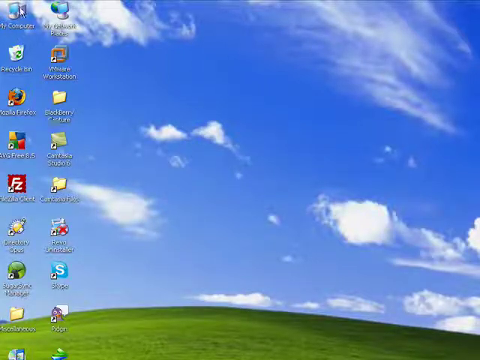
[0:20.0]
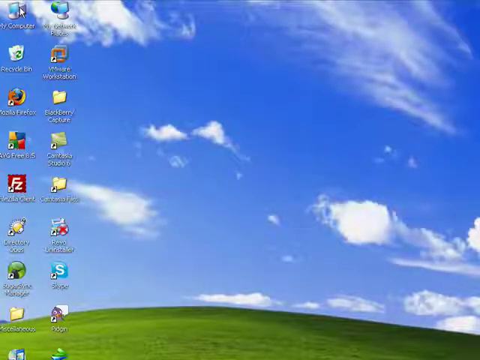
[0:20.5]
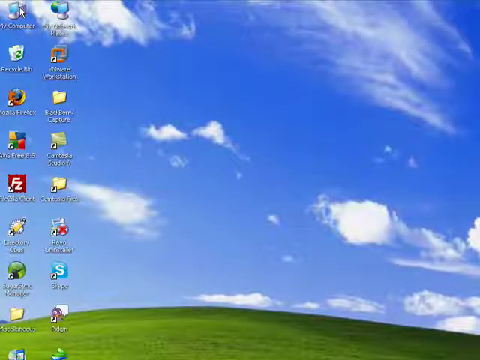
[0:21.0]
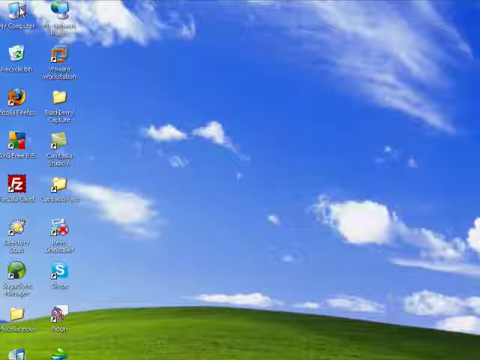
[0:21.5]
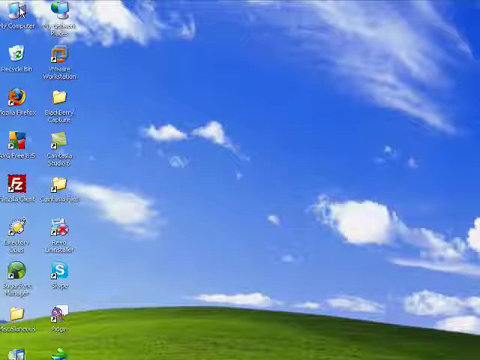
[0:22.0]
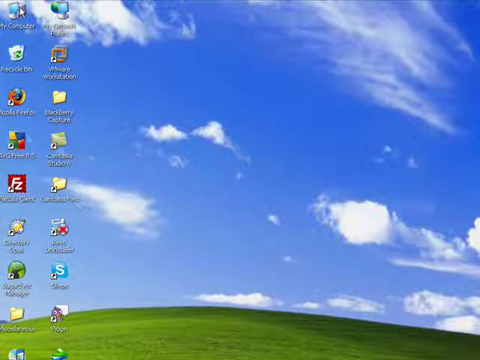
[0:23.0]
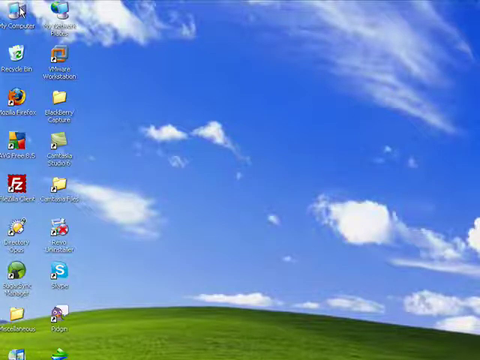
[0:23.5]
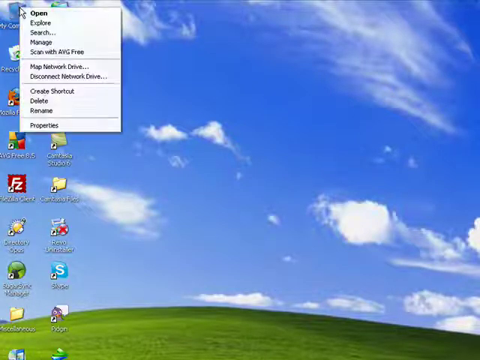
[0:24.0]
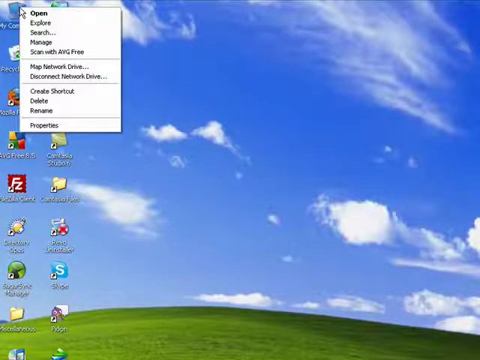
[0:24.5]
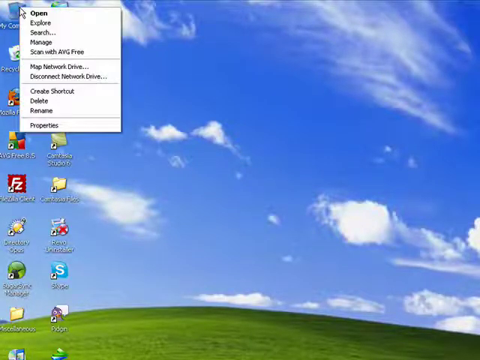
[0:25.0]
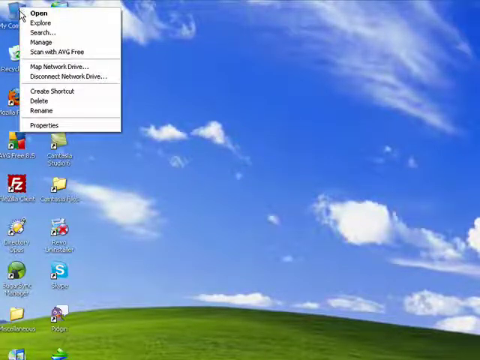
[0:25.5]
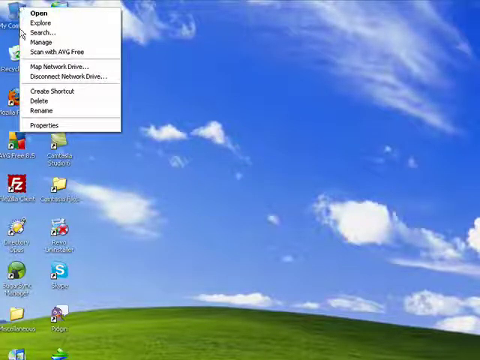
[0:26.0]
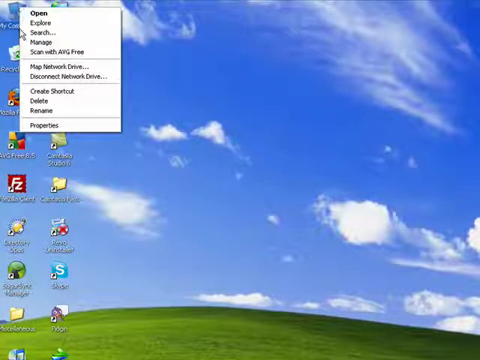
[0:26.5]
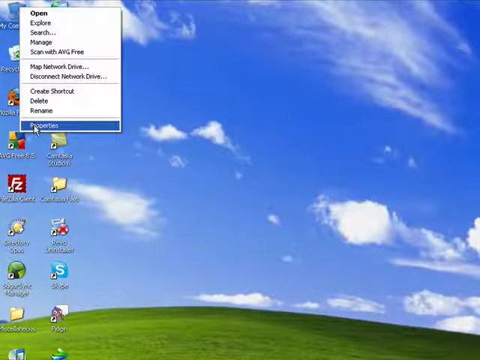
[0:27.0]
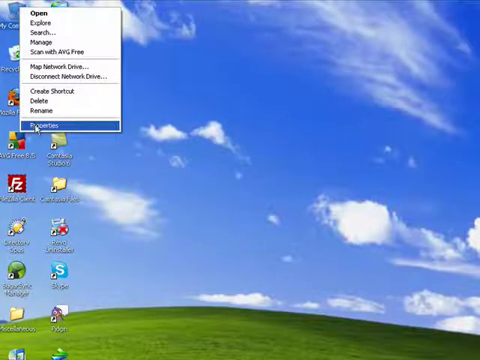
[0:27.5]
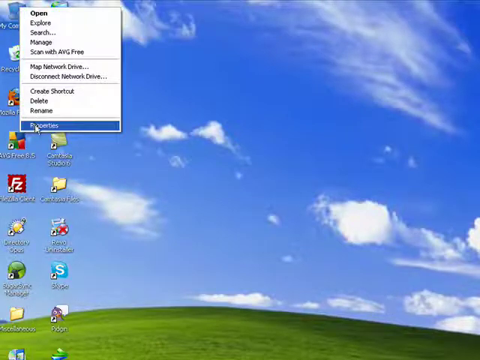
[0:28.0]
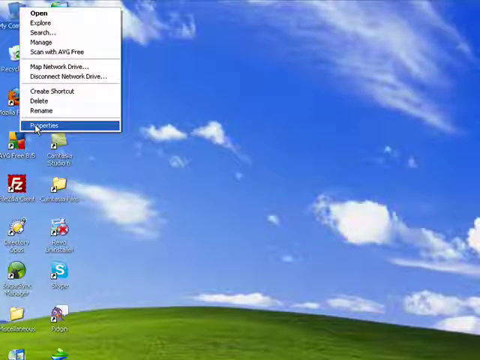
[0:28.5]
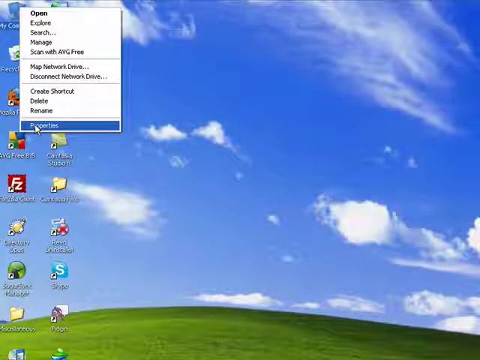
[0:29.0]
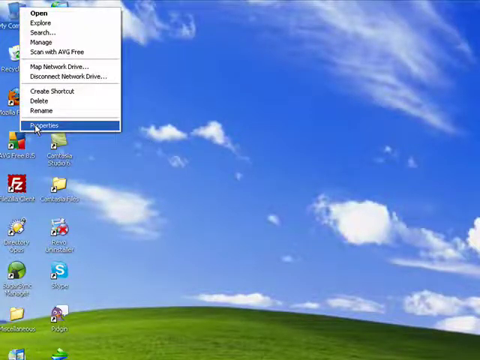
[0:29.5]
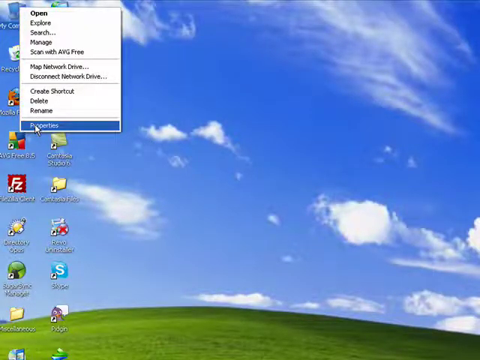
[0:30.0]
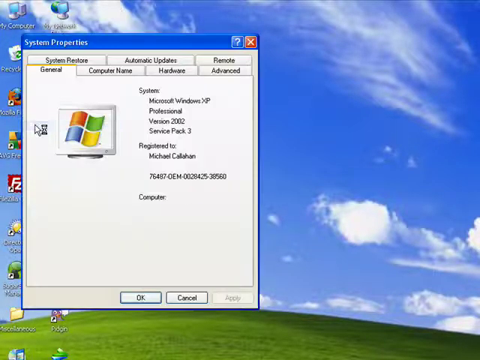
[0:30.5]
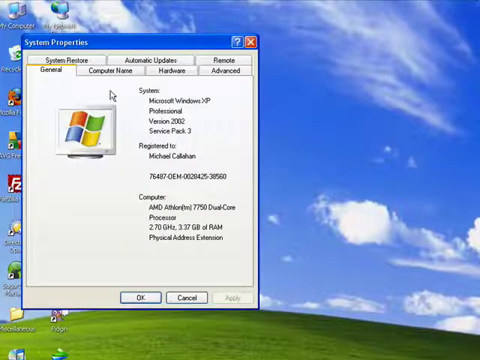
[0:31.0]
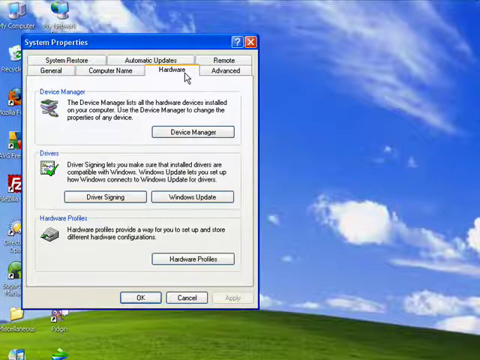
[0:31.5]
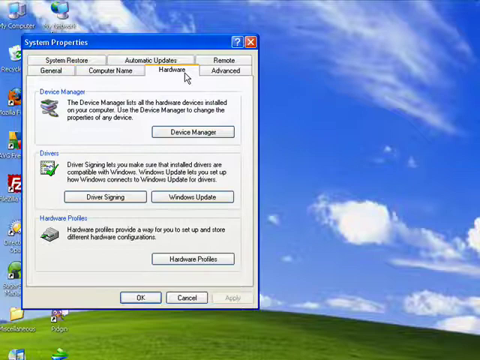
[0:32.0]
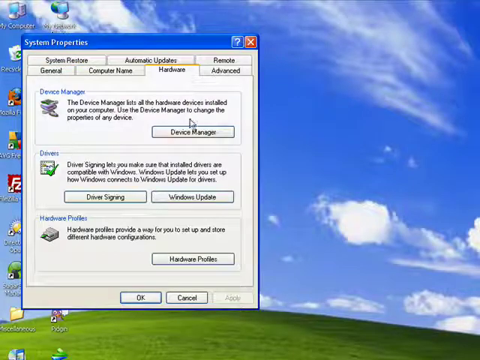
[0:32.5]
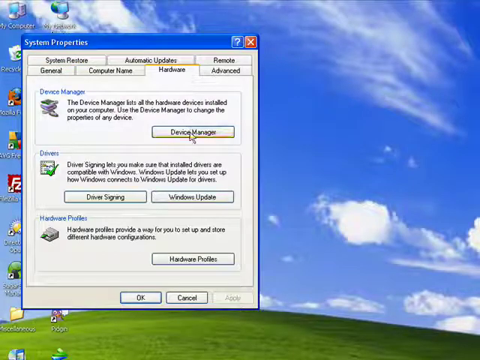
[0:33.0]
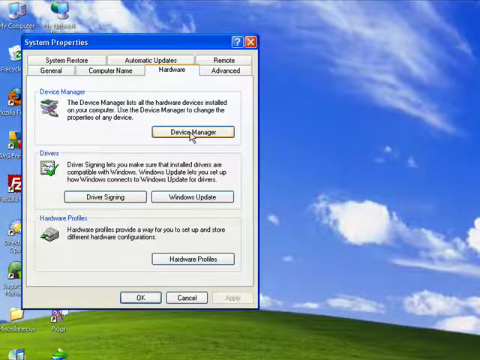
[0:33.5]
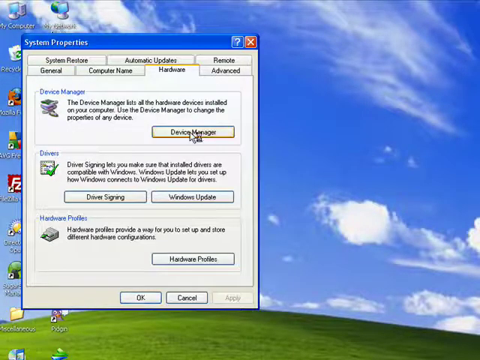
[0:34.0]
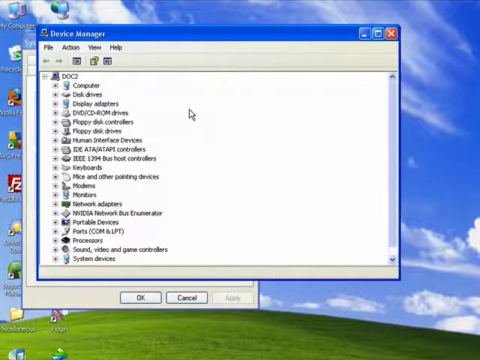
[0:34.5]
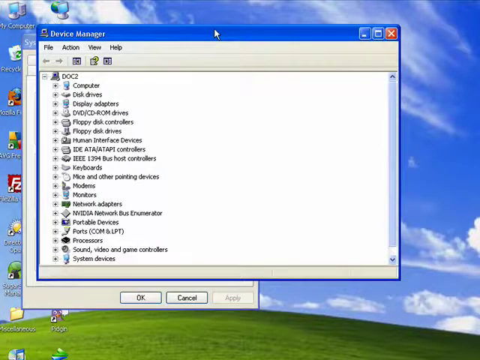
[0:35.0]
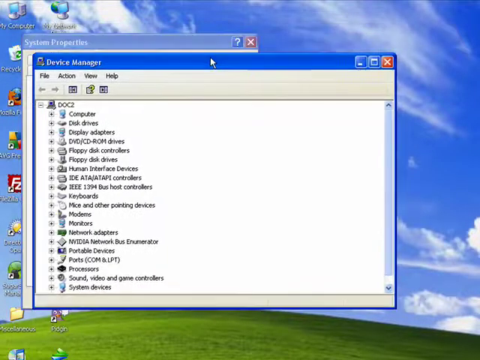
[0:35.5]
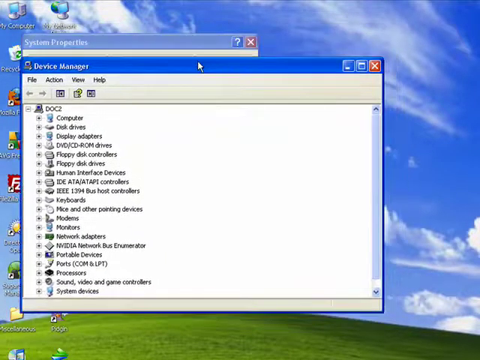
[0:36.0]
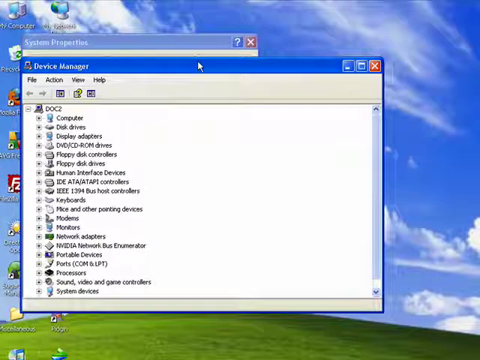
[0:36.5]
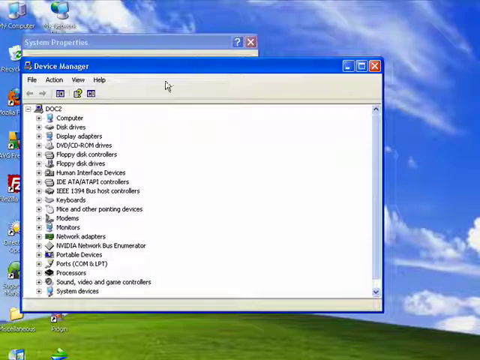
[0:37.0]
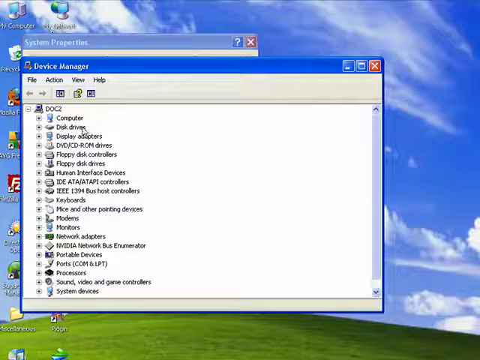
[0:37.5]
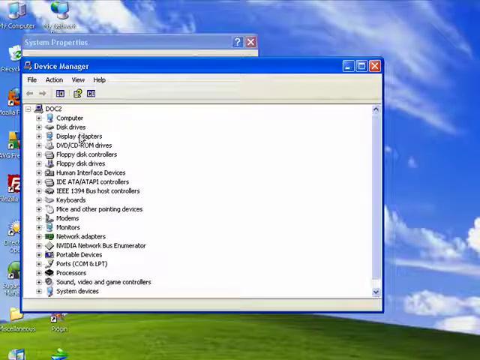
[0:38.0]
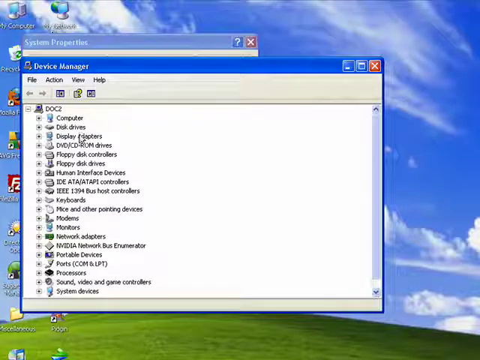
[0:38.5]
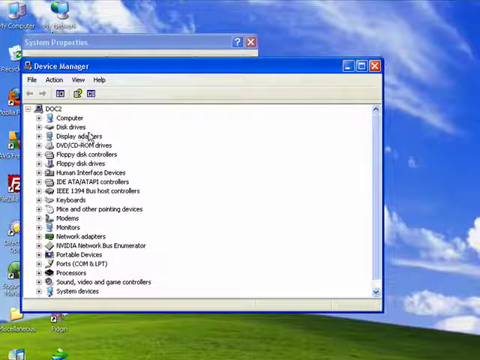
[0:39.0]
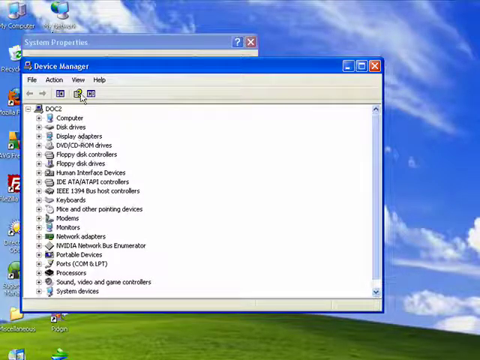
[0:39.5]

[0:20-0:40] The Windows home screen is shown with white clouds, blue sky and a hill at the bottom, and many icons on the left starting with My Computer at the top left. My Computer is right-clicked, and Properties is chosen from the drop-down menu, which leads to the Hardware page; the tabs include Computer Name, Hardware, Advanced and Remote. The Device Manager button is selected, and clicking it brings up a tree menu of everything in My Computer, listing all the devices and systems that run the computer. The view is in the Files folder with a tree menu, and that screen is left open for some seconds.